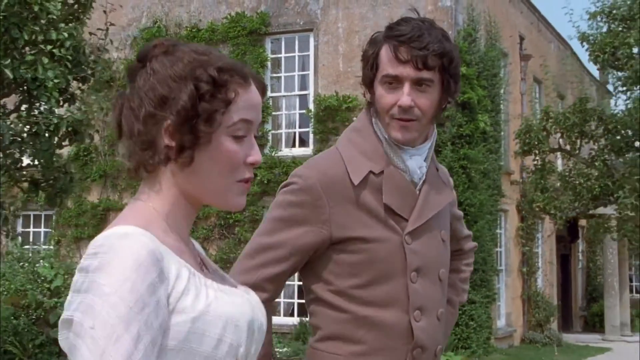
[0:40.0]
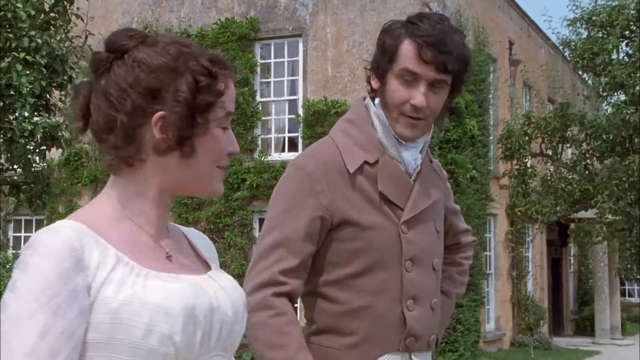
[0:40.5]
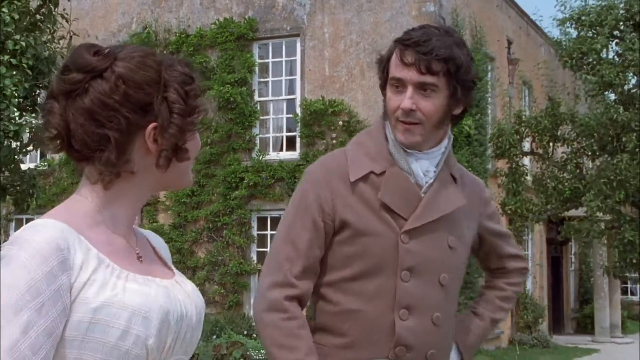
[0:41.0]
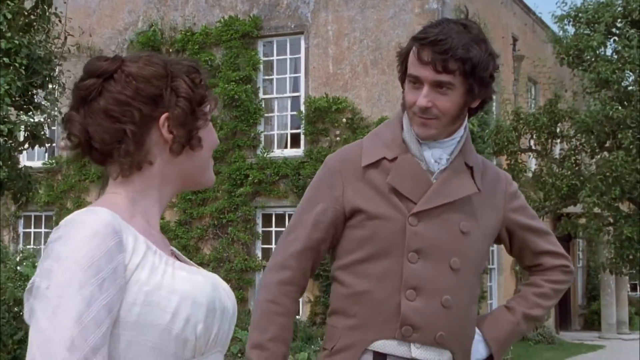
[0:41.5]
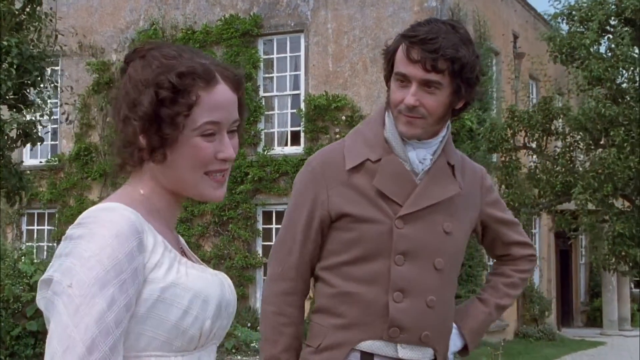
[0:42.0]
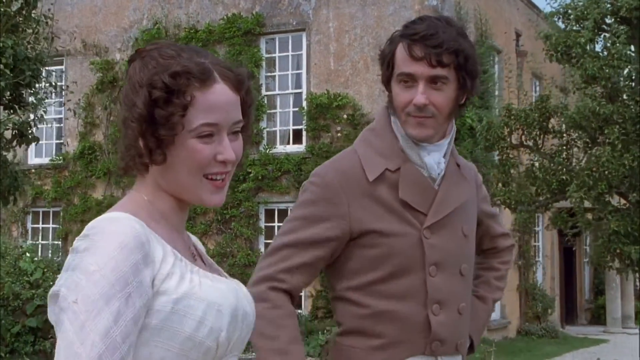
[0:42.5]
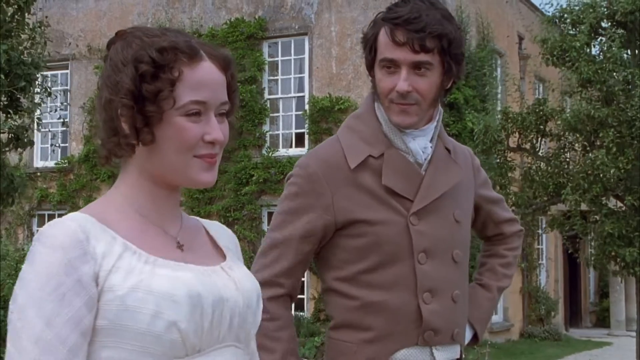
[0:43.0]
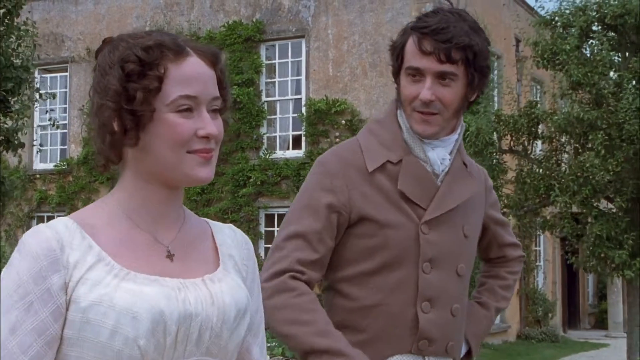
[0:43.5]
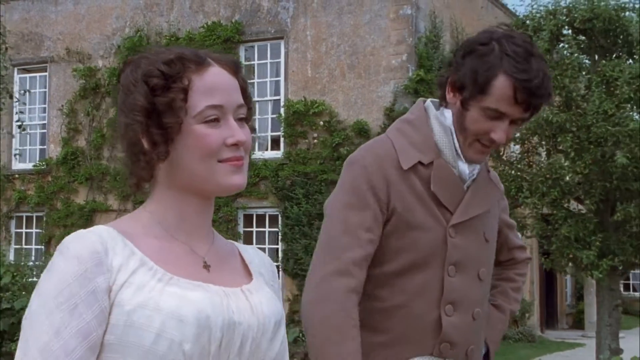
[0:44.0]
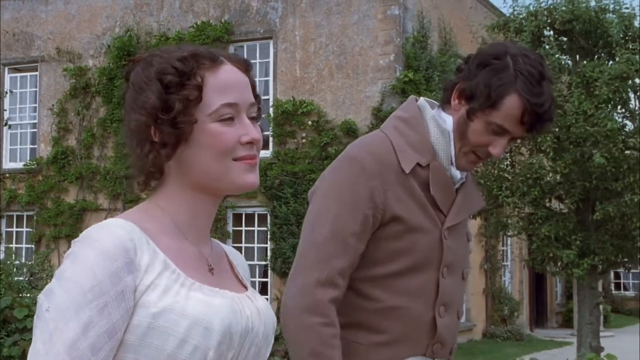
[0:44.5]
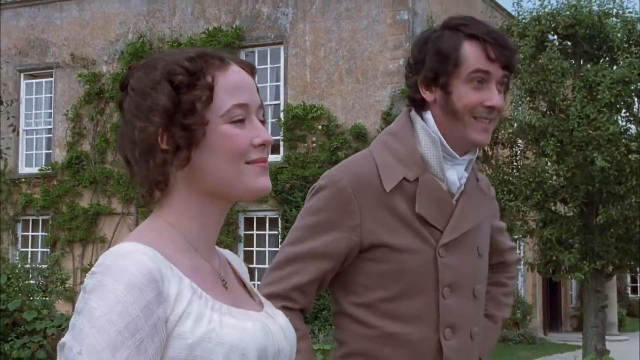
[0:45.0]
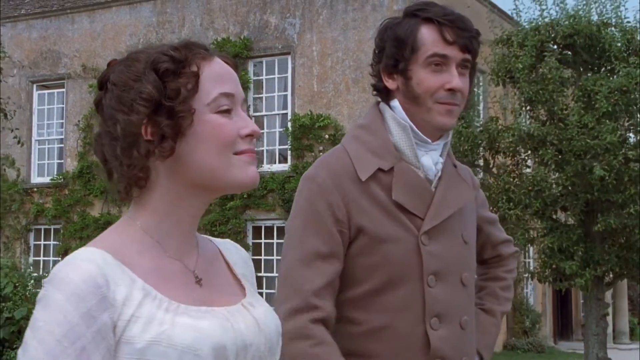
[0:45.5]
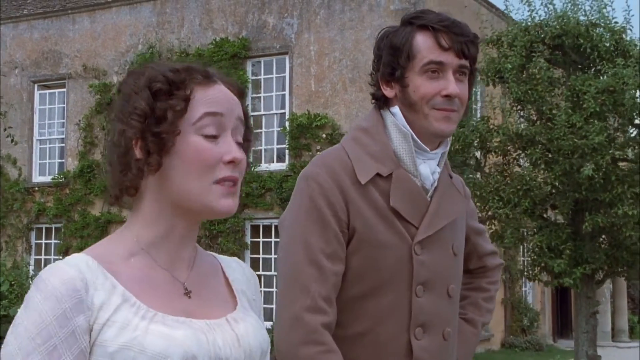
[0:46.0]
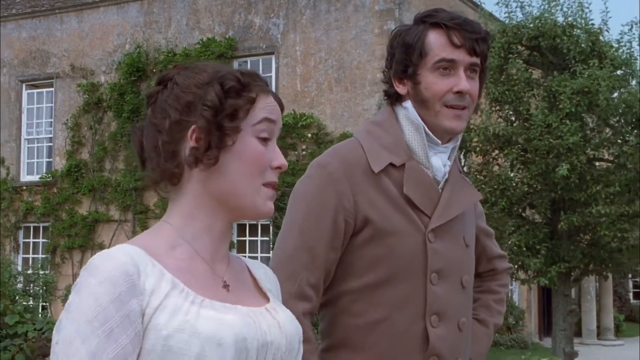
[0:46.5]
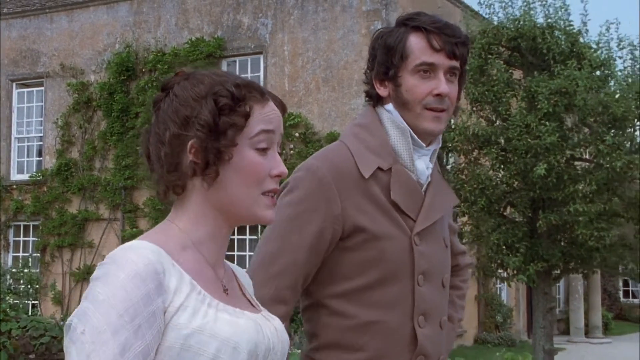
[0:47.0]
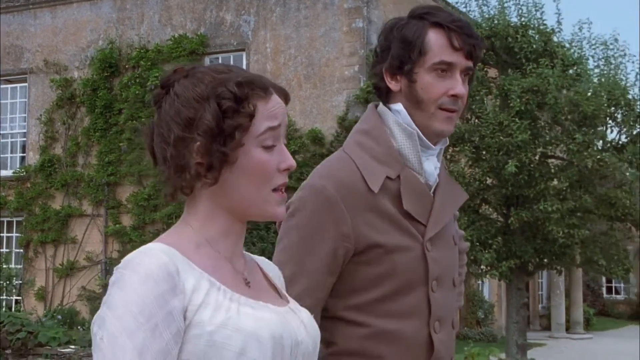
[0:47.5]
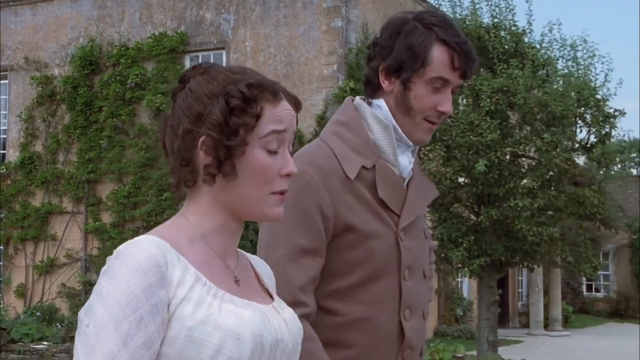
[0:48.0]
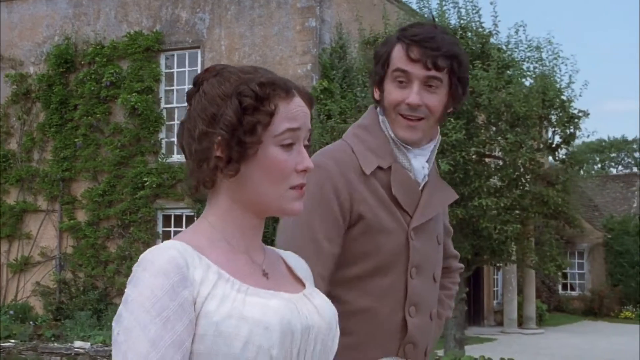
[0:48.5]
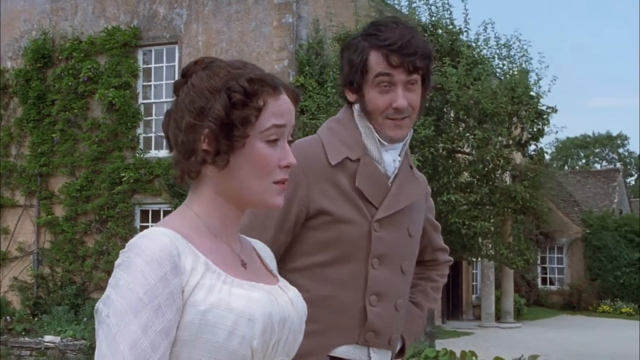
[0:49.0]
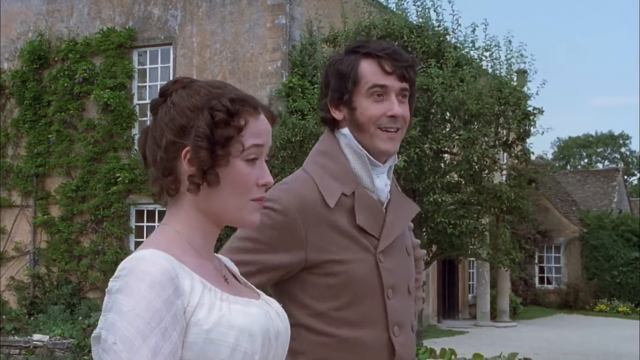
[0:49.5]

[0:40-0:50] The lady and the man continue walking around the garden, talking. An old wall of a building is covered in what appears to be a planted flower that looks like grass. The two are serious and deep in conversation, smiling as they walk. No title or text appears on screen.